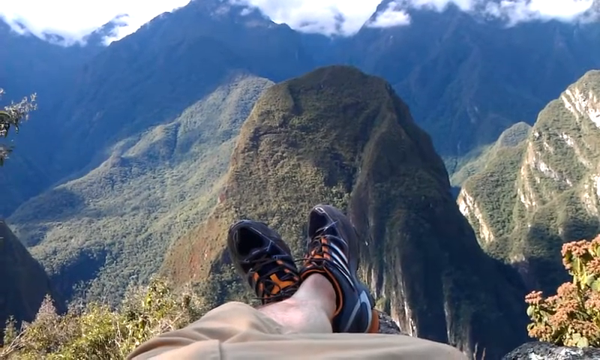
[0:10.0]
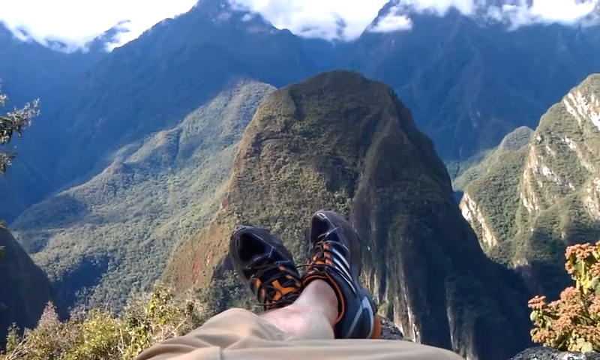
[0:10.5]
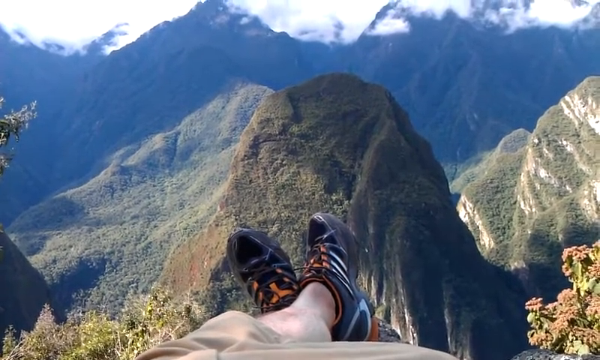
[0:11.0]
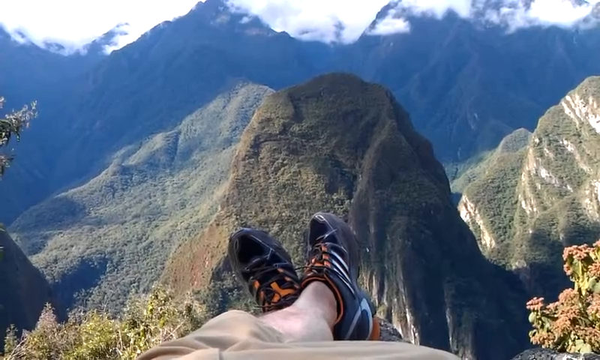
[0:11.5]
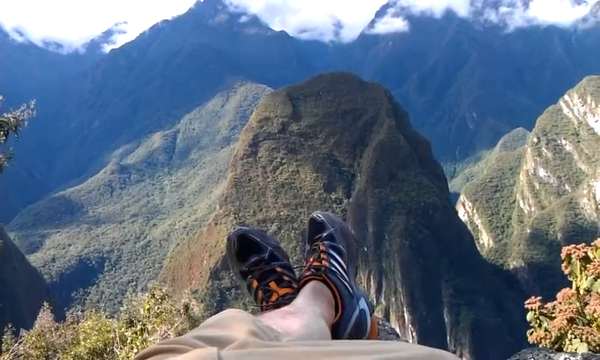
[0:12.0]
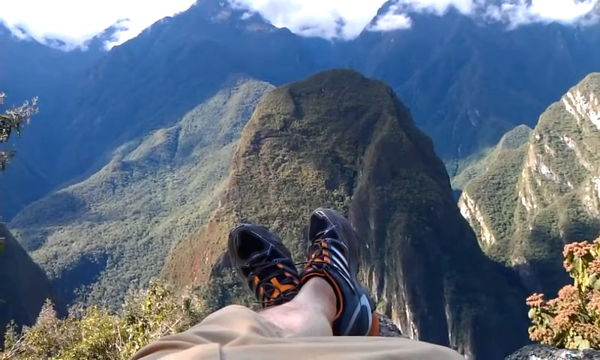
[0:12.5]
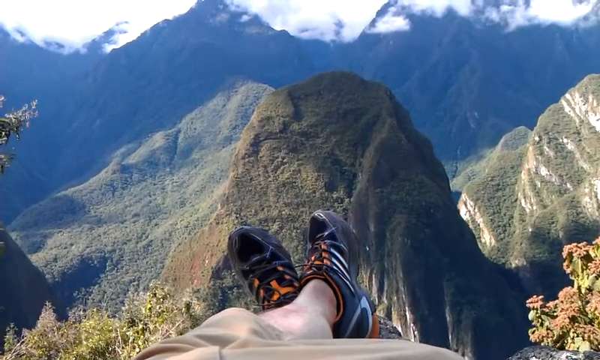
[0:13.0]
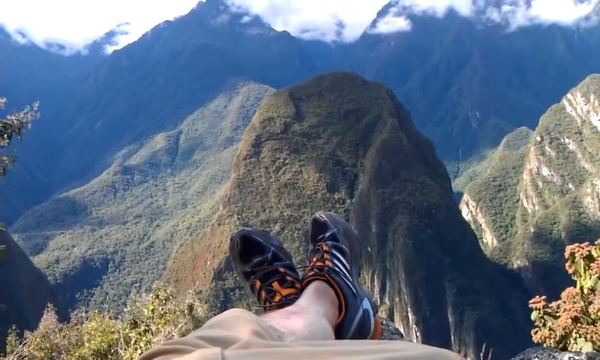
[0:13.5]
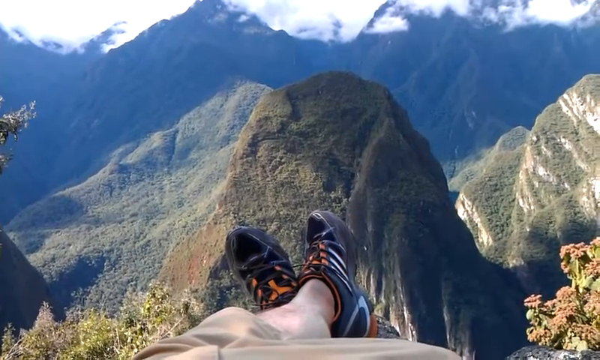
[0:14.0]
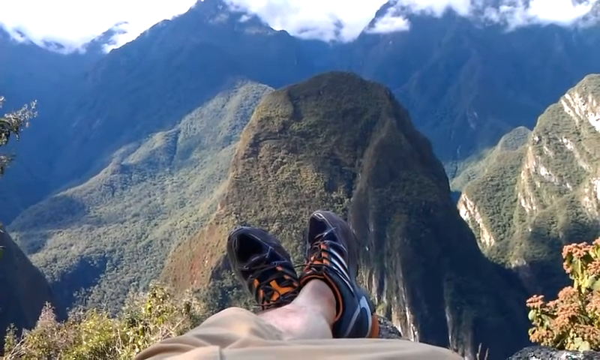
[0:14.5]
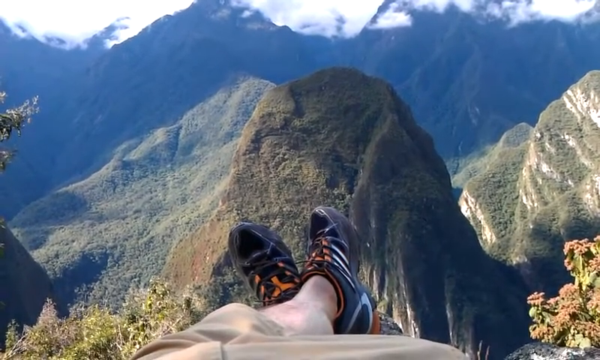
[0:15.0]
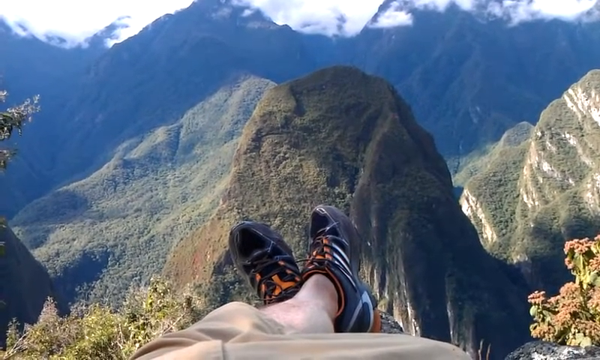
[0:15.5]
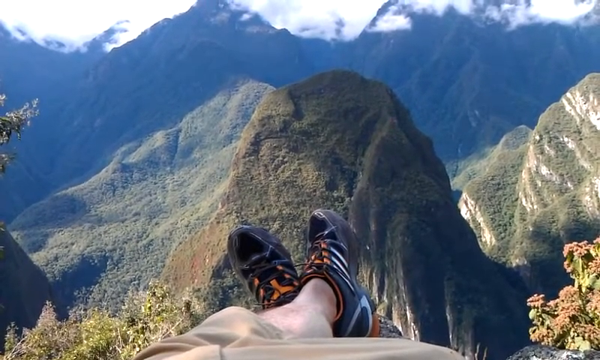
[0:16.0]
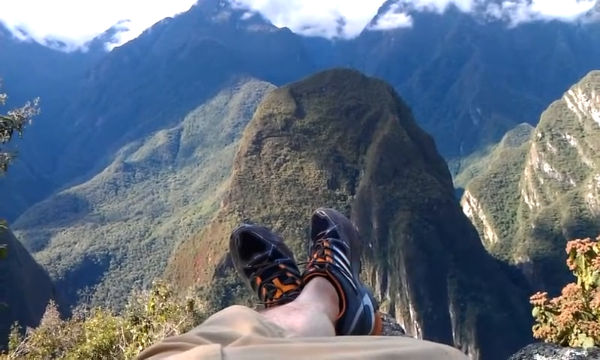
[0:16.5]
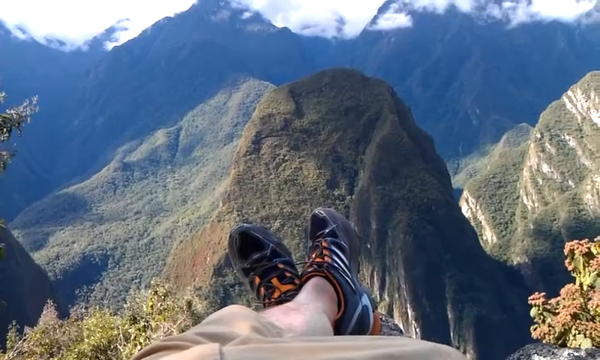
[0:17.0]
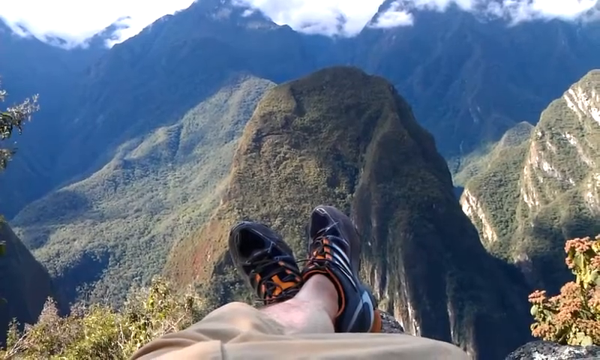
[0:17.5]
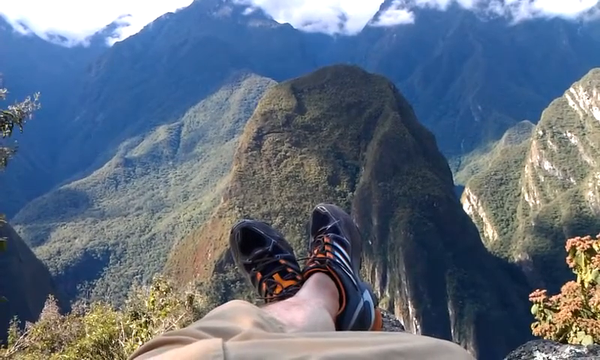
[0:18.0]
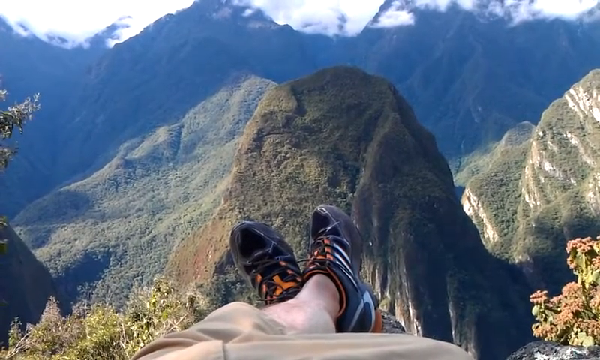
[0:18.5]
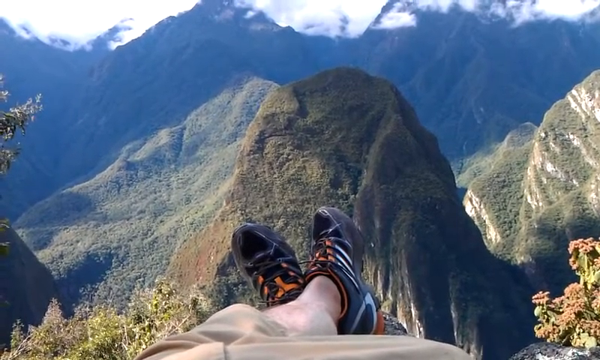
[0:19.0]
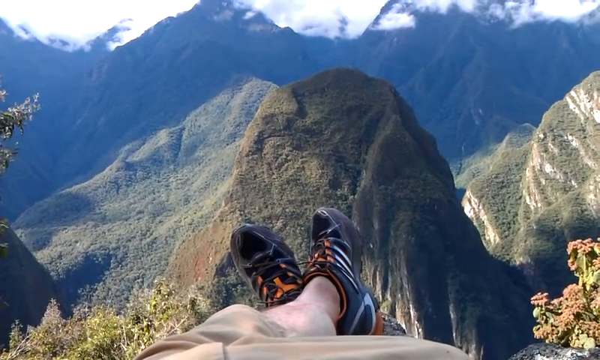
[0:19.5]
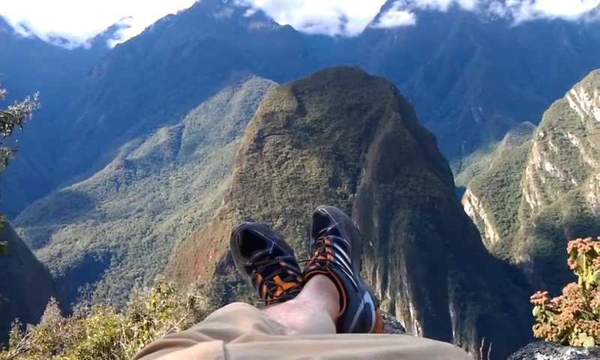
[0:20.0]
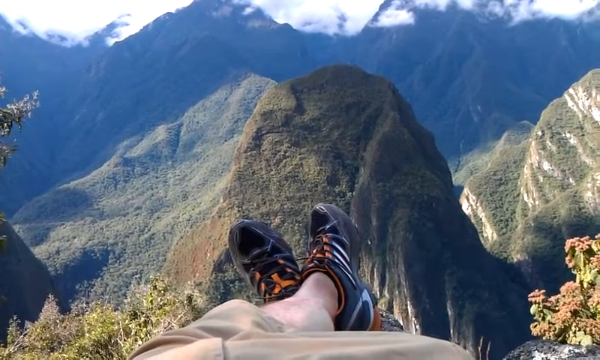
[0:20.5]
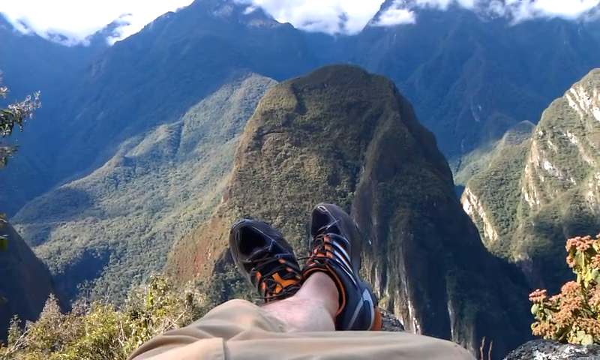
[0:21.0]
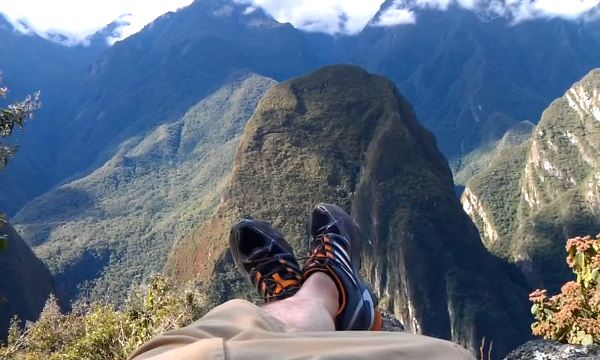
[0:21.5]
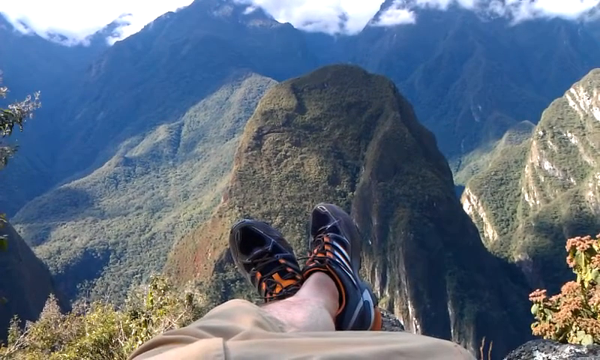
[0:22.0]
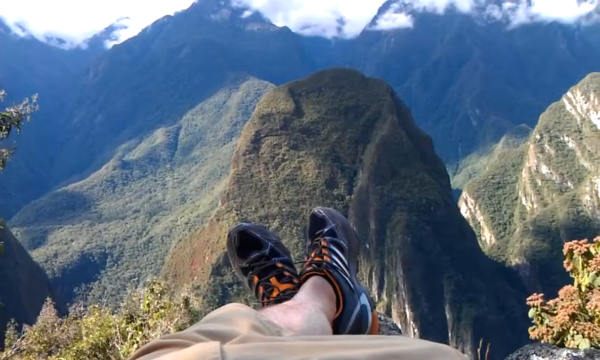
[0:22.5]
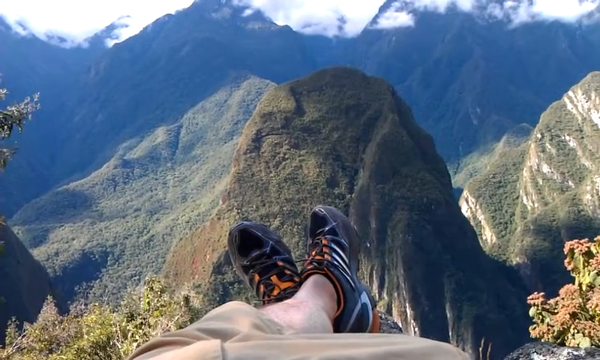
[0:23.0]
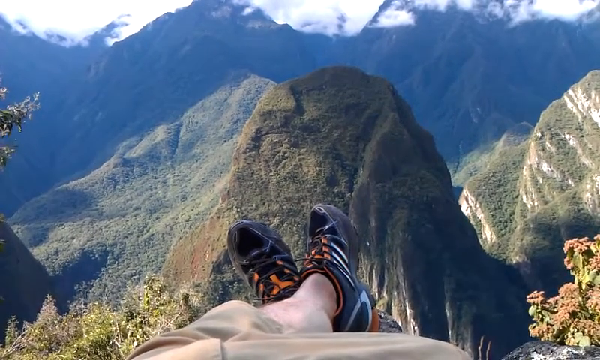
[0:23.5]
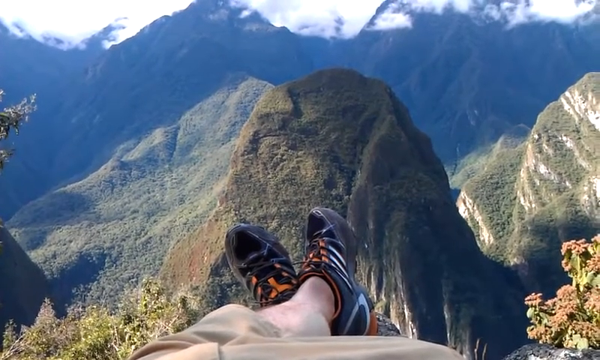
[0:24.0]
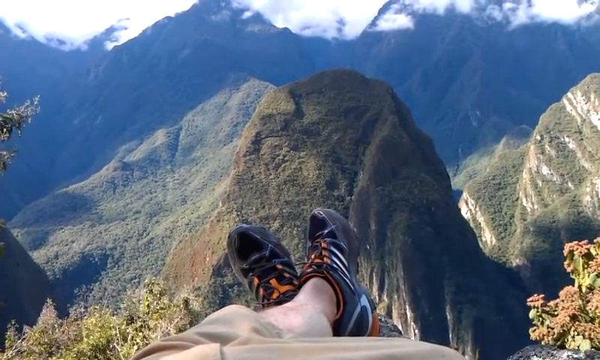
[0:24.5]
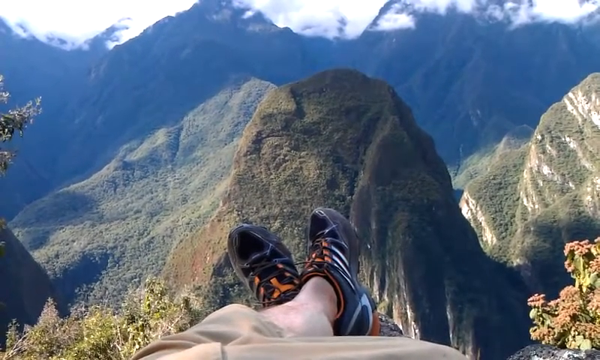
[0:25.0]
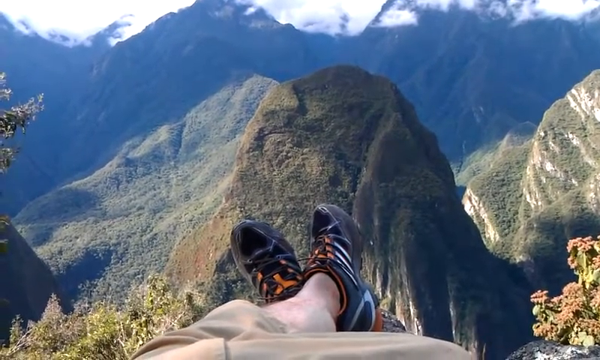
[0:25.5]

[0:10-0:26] The mountain view continues. The climber sits relaxing, not doing much, while a bit of cloud drifts across the valley, partly obscuring the high peaks. It is a sunny day: the valley is in bright sunshine, while the higher peaks are shaded to some extent. To the climber's right is a plant that looks a bit like gorse, a straggly bush with small yellow flowers. There is a tree to his left-hand side. Far down in the valley there might be a bit of woodland, and there is no sign of human activity in the view, only massive mountains.